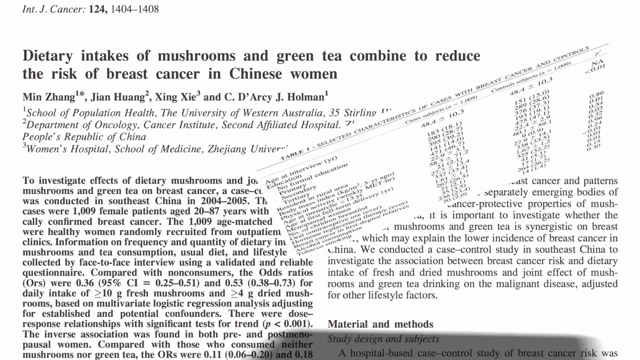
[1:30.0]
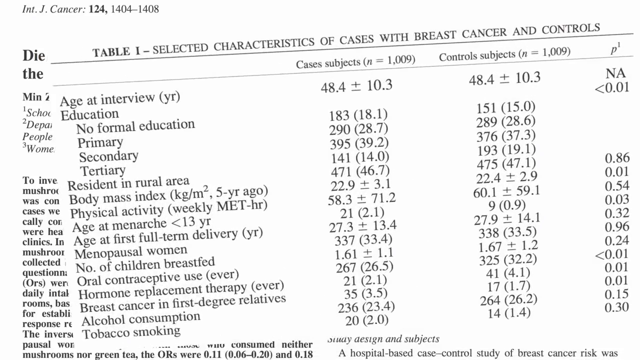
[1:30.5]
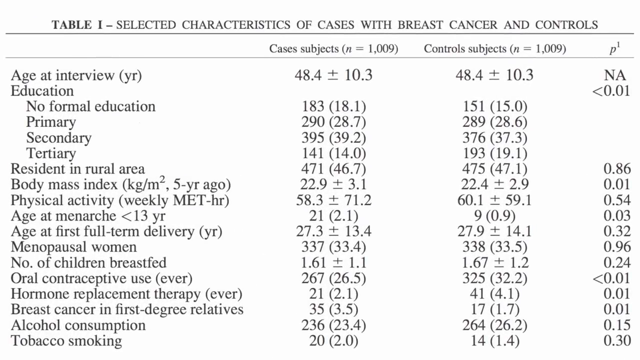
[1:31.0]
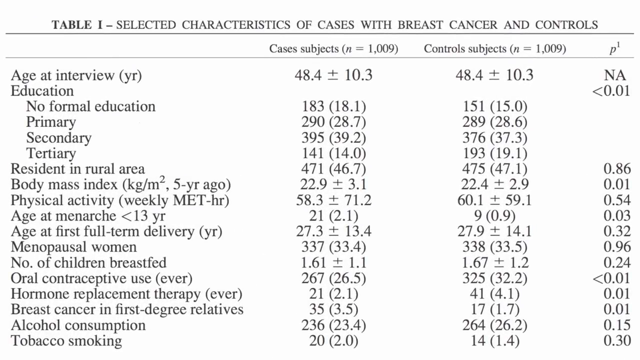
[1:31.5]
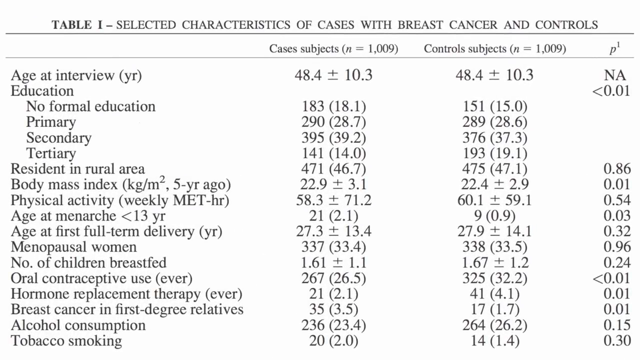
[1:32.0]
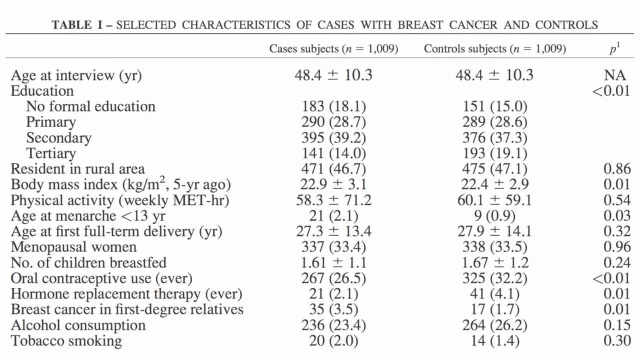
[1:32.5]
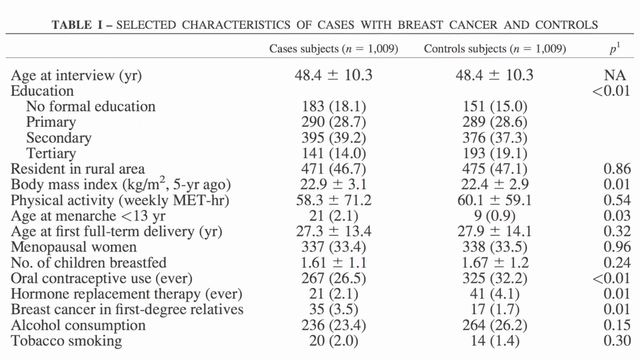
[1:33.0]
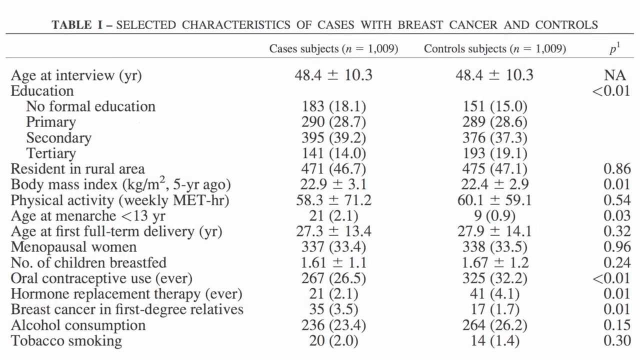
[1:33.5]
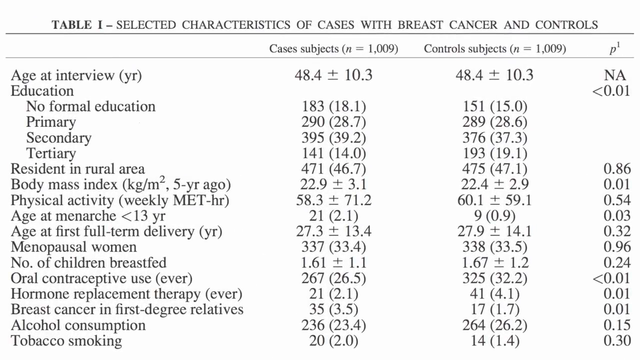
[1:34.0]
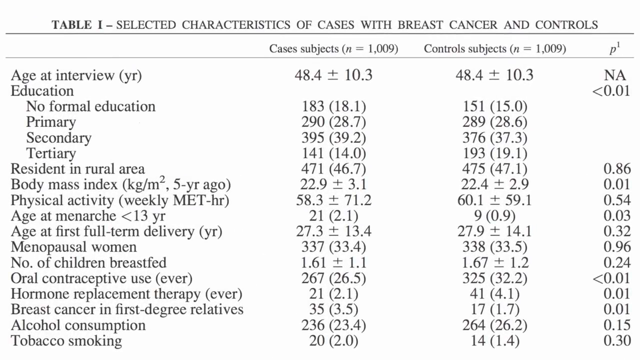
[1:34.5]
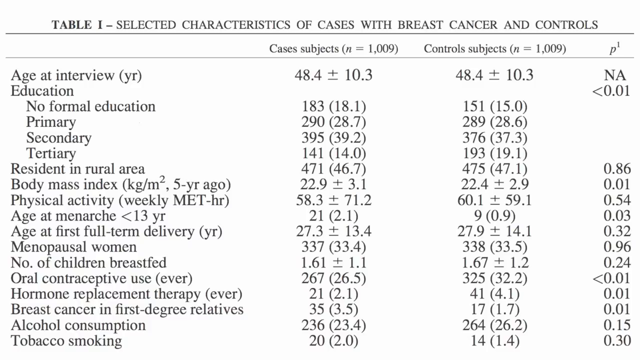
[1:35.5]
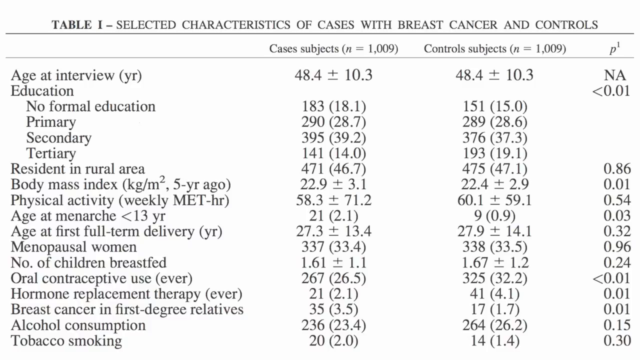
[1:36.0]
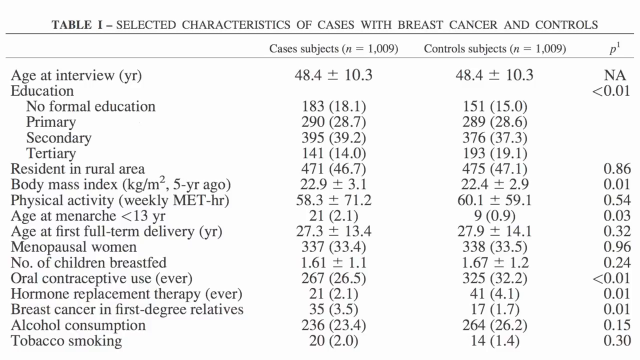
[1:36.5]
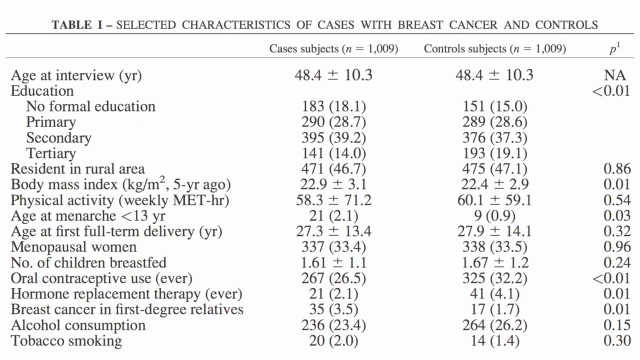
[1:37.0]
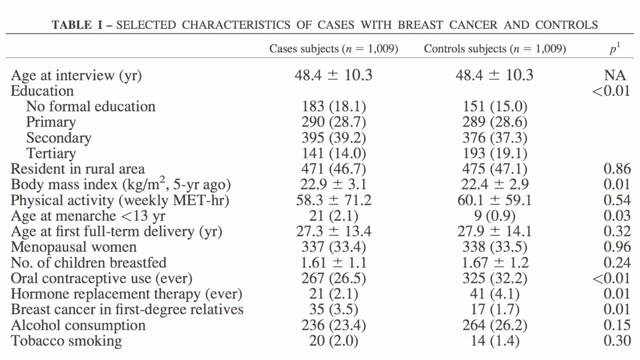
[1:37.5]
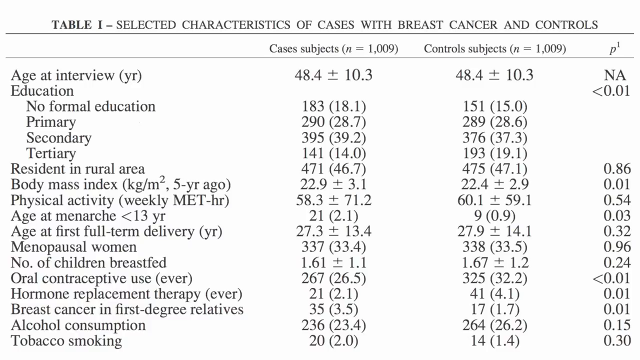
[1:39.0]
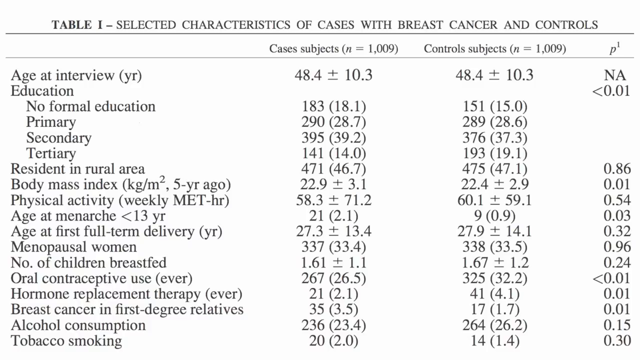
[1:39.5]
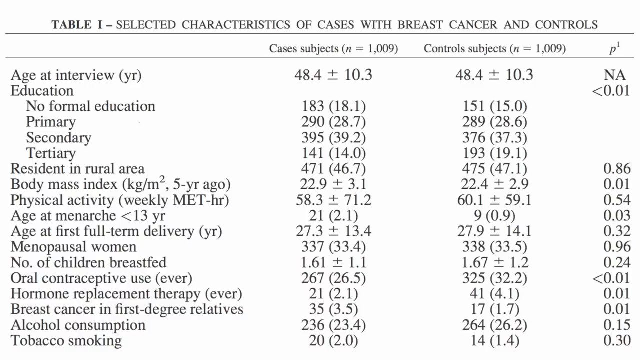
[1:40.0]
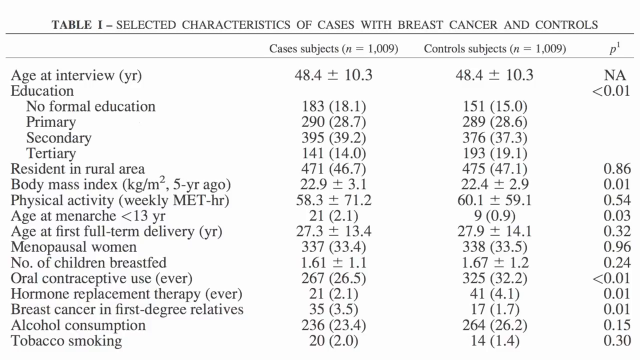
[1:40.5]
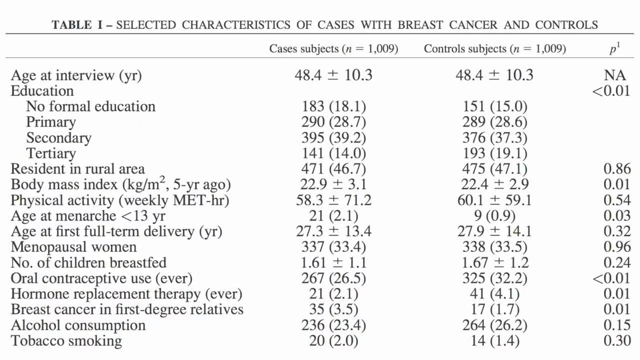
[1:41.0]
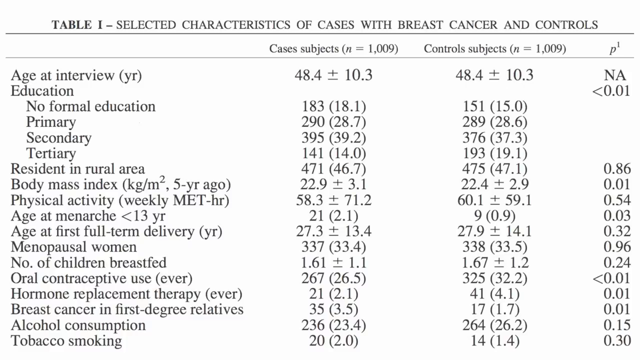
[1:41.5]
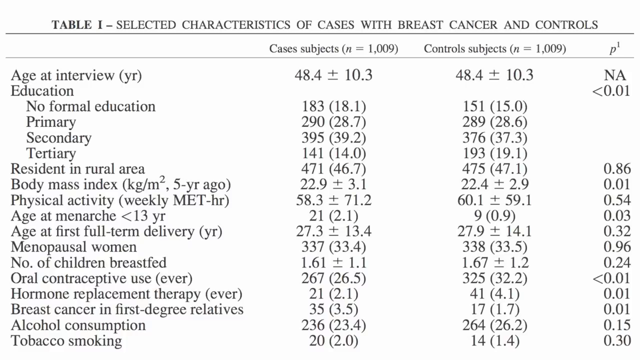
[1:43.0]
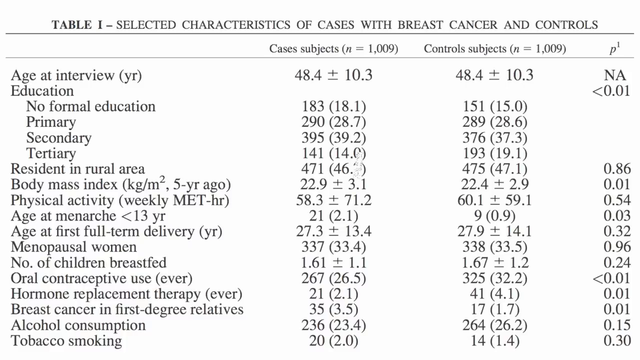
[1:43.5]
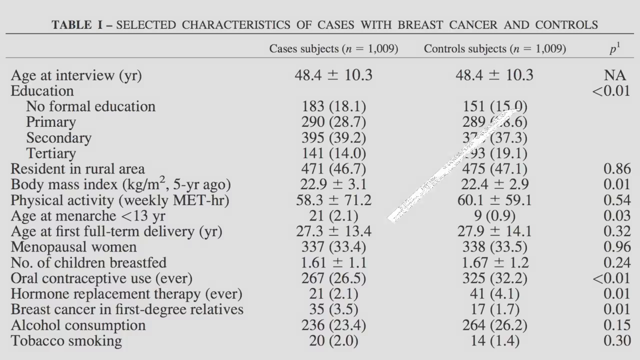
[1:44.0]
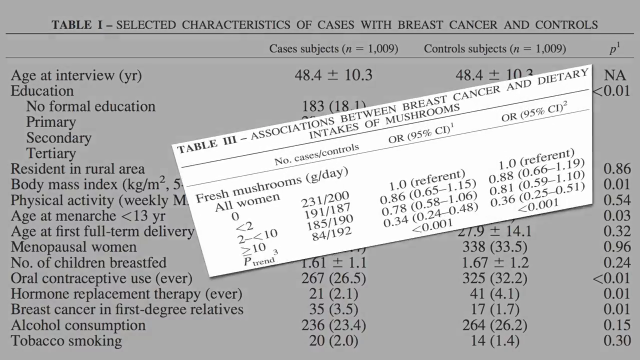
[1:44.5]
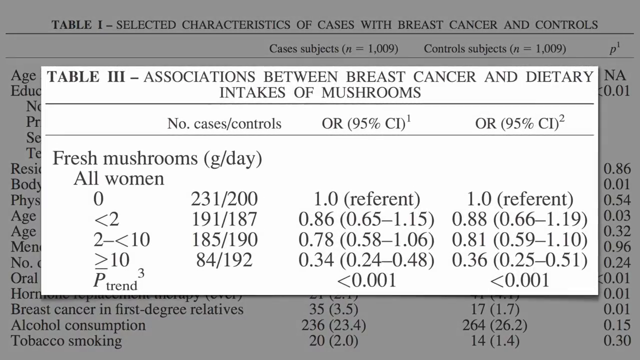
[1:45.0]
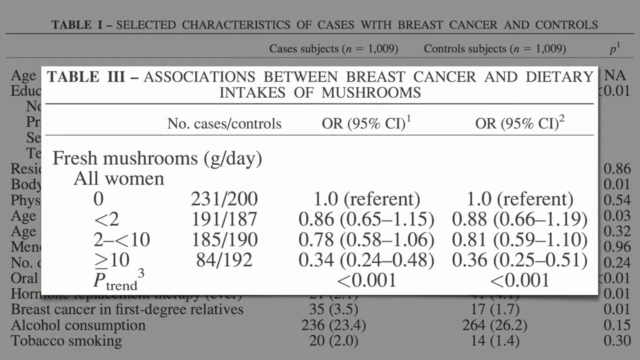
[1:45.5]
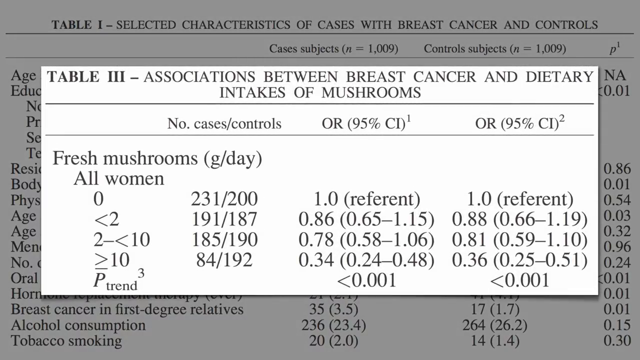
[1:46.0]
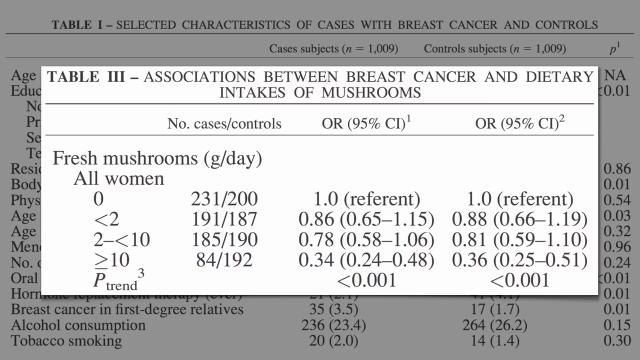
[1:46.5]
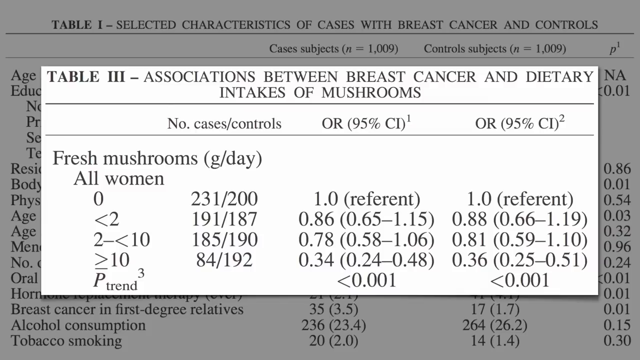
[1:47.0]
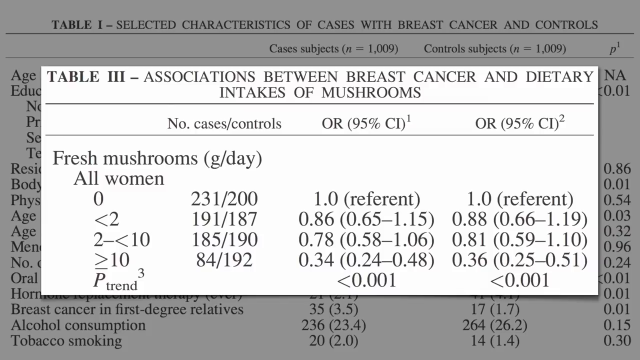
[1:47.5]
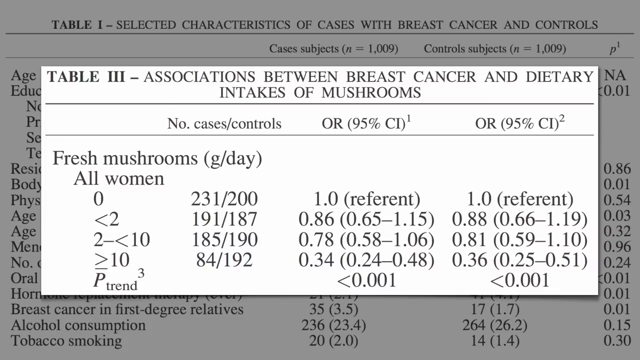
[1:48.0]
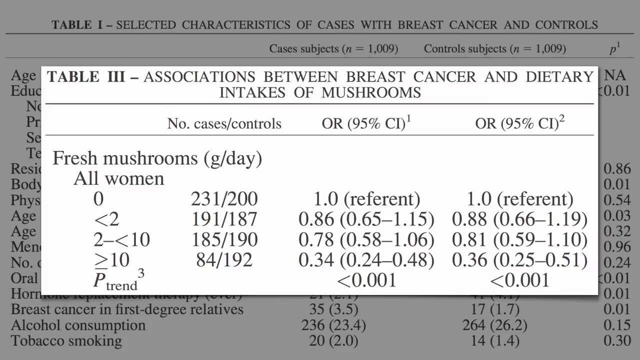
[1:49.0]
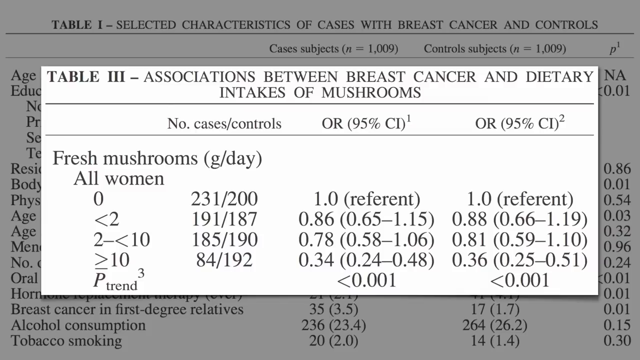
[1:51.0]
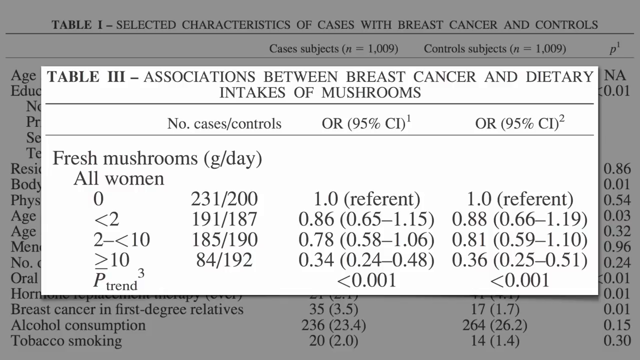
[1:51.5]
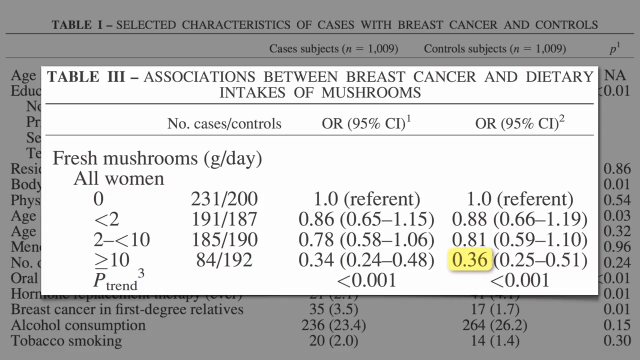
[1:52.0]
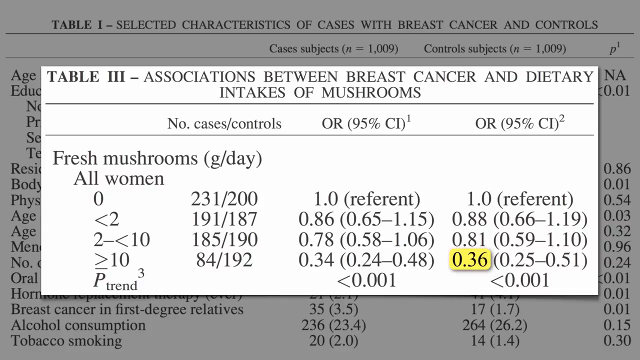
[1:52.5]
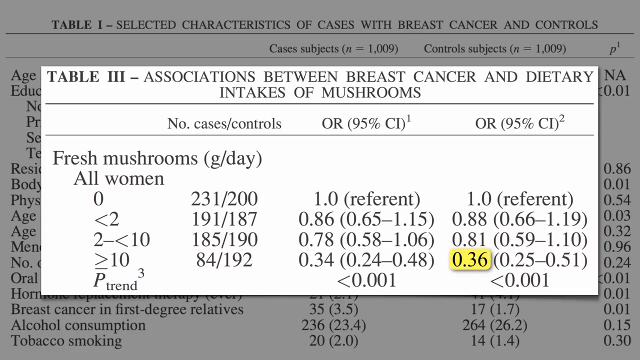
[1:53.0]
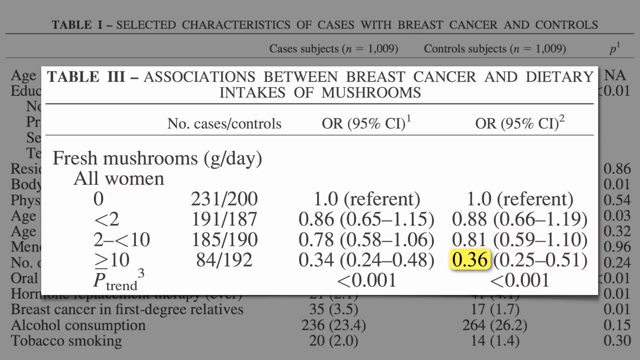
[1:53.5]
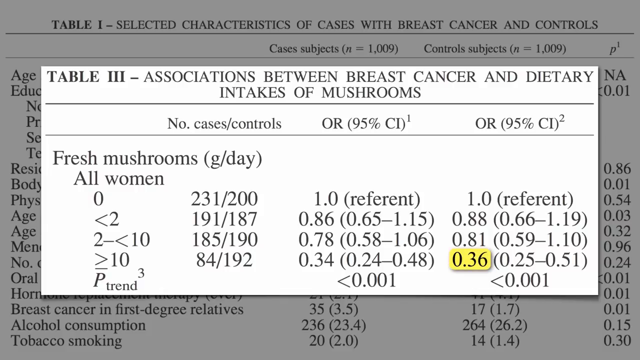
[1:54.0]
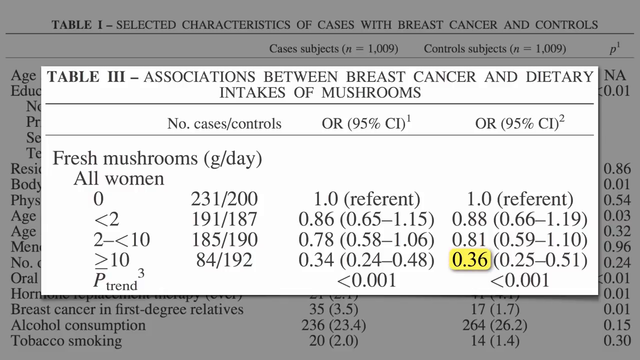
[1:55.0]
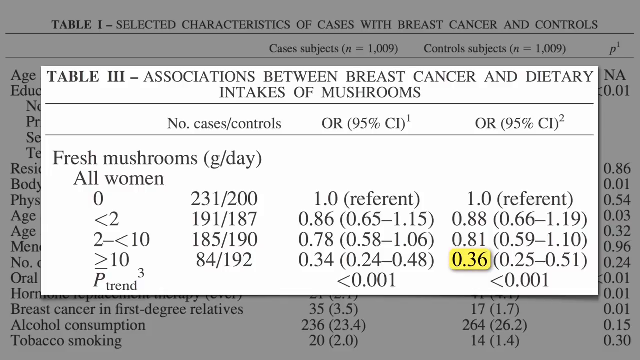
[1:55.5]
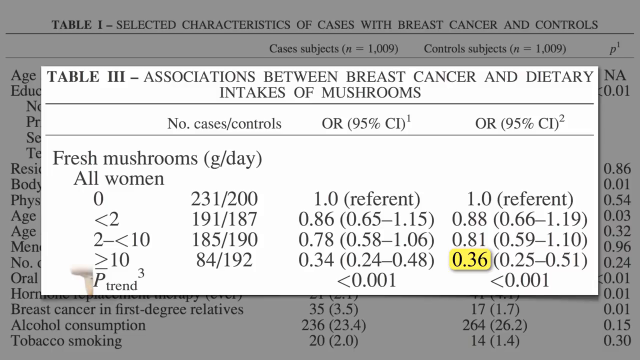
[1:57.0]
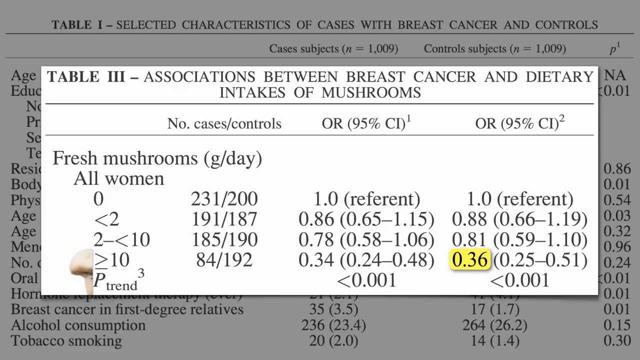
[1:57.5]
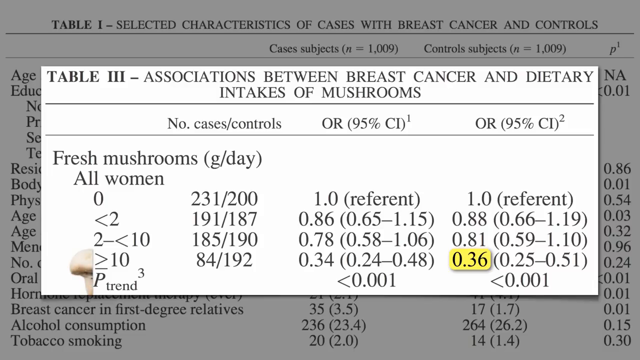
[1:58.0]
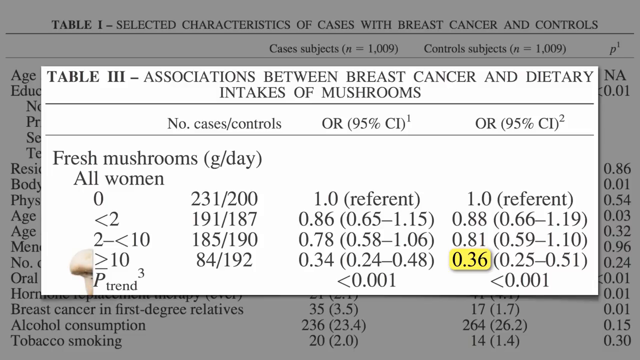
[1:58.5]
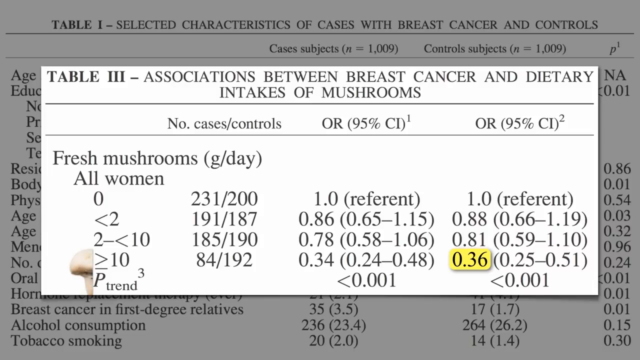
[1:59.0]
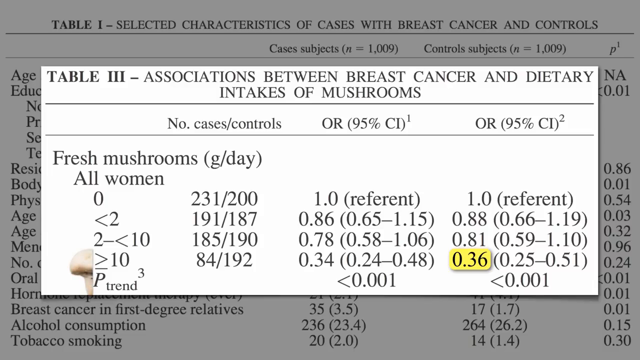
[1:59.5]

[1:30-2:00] The transition completes on a white background with a lot of black text: "Table 1, Selected Characteristics of Cases with Breast Cancer and Controls". The left column lists the age at interview, education level, whether they reside in a rural area, body mass index range, physical activity, age, age at full-time delivery, menopause, number of children breastfed, contraceptive use, hormone replacement therapy ever, breast cancer, alcohol consumption and tobacco smoke, with corresponding values for case subjects and control subjects to the right and the p-value on the very right-hand side. The case subjects and control subjects both number 1009 in total. Another transition appears from the middle, slightly right side of the screen: a white rectangle with black text spins and enlarges, overlapping the inner section of Table 1. It is labeled "Table 3, Associations Between Breast Cancer and Dietary Intakes of Mushrooms", separated by number of cases/controls and fresh mushrooms in grams per day for all women, with corresponding CL values on the right-hand side of the table. On the very right-hand side of the table, one of the values in the OR 95% CL 2 column, 0.36, is highlighted in yellow.